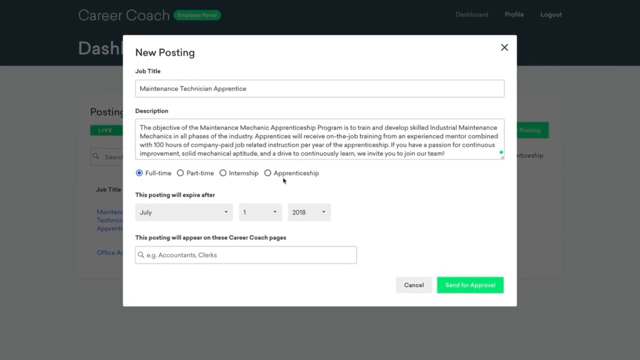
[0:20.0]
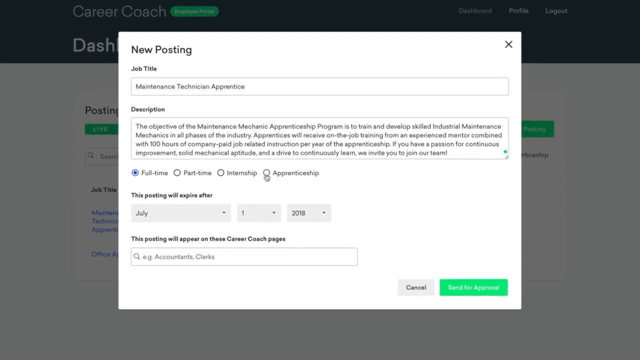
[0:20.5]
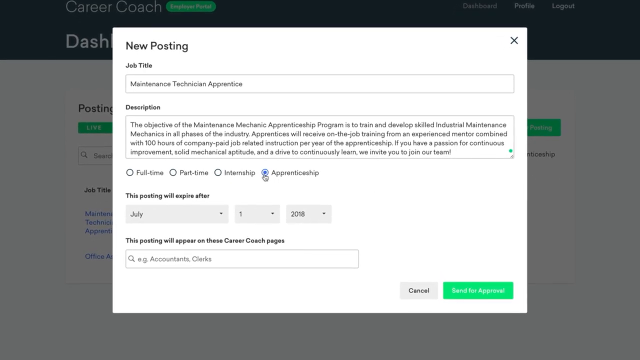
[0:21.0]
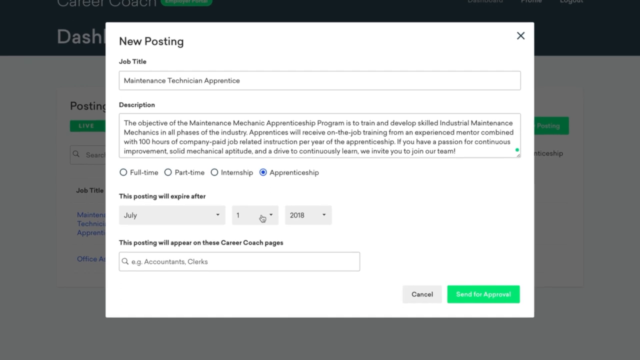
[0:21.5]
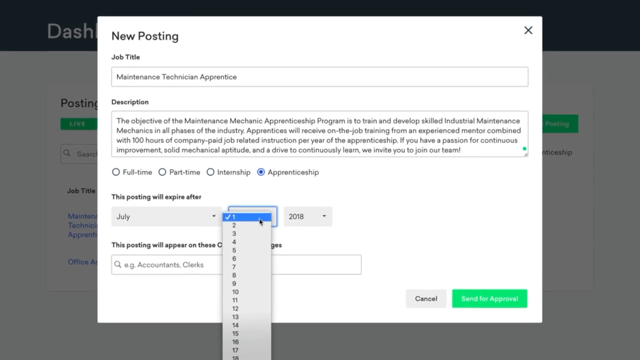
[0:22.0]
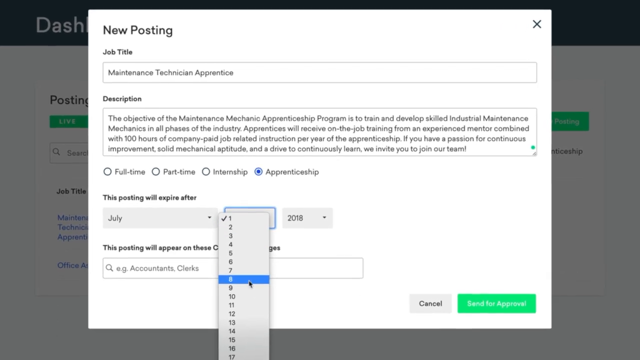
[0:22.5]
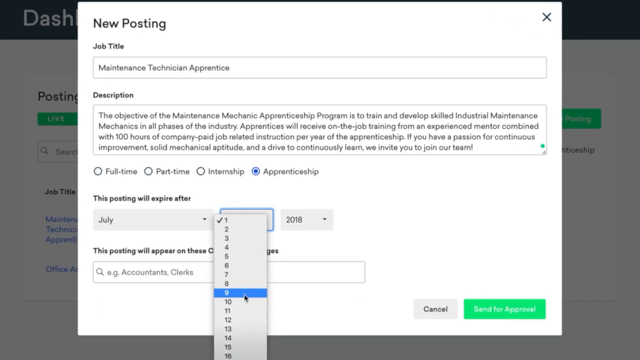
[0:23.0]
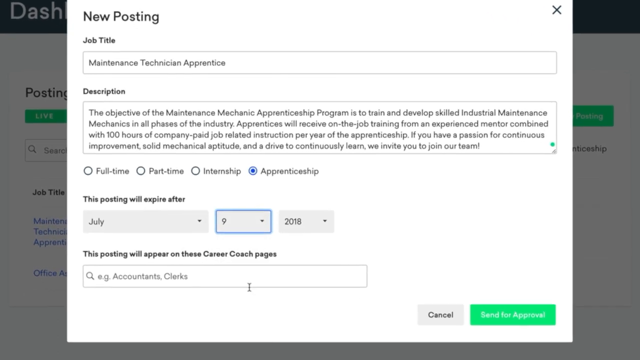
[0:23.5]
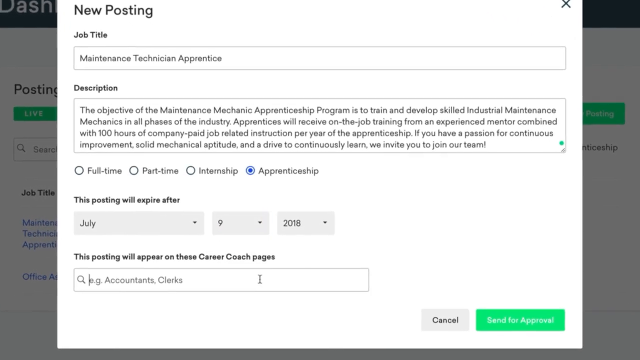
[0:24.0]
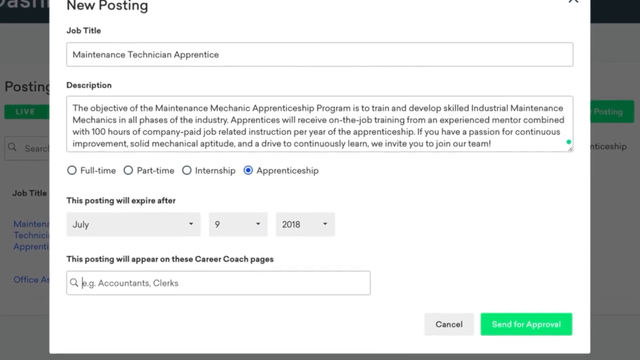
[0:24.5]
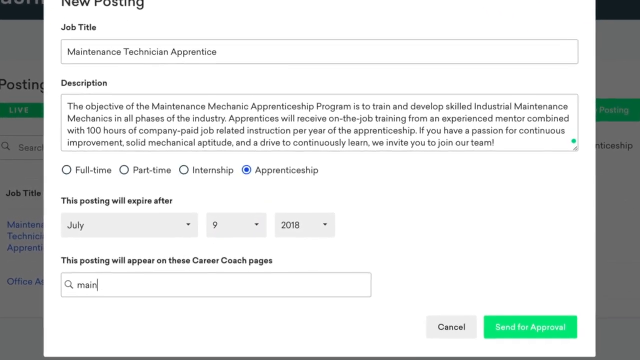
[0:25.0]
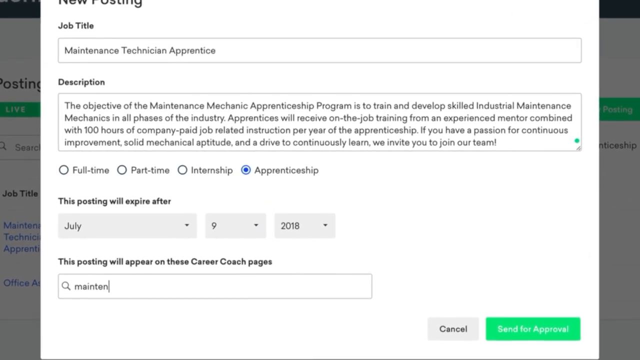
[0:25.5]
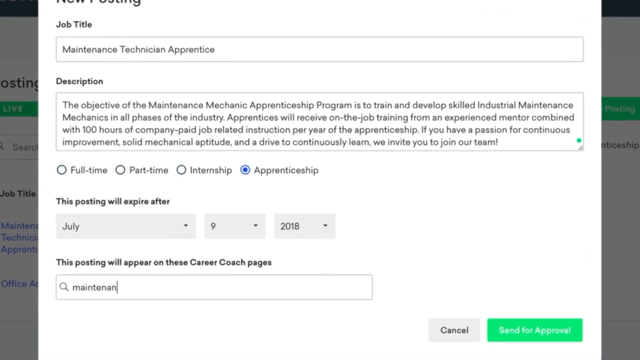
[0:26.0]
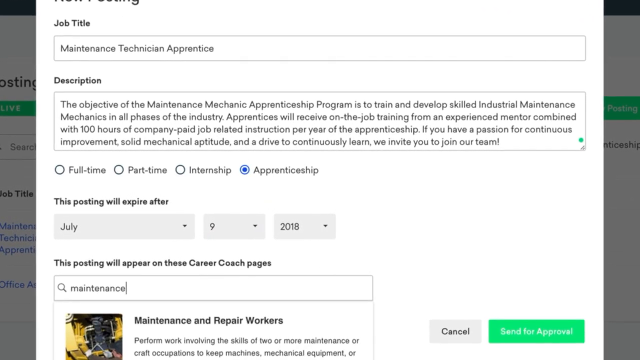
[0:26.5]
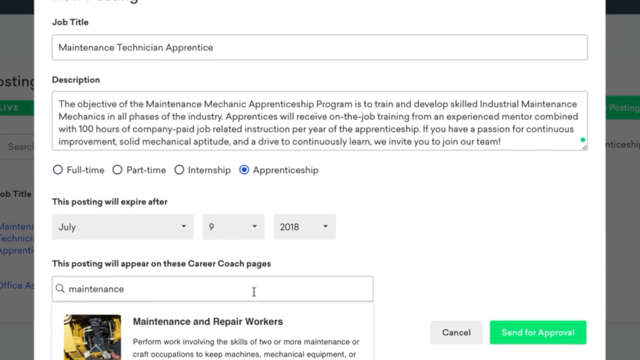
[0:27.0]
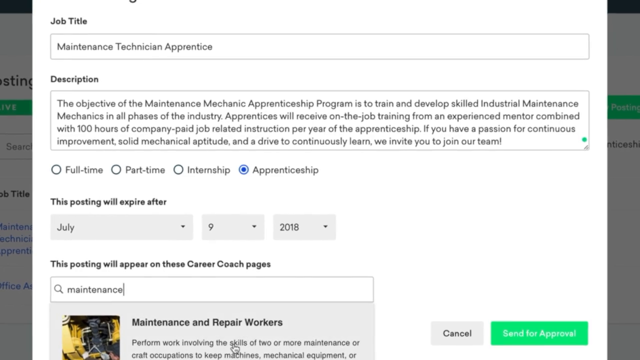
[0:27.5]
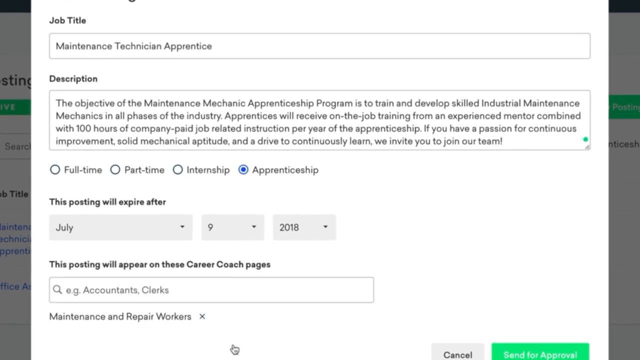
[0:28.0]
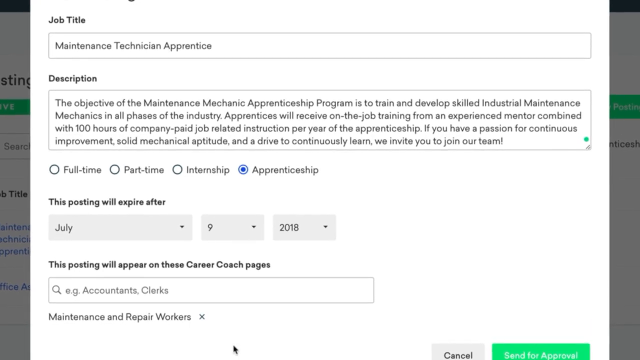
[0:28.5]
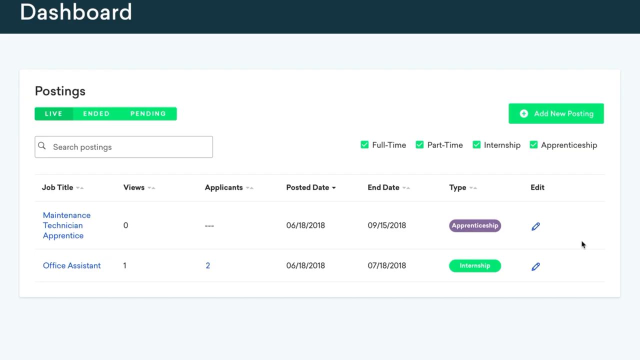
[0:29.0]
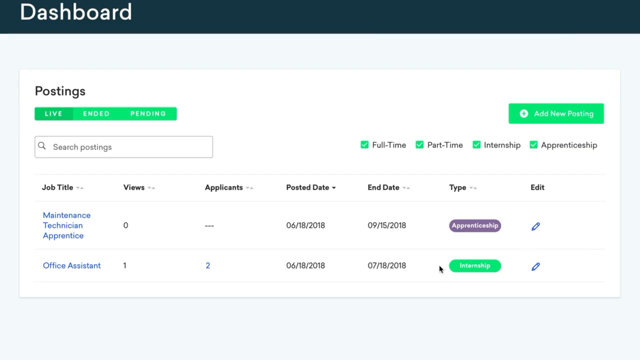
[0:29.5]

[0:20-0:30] A web page is open with a job posting titled "Maintenance Technician Apprentice." Its description reads: "The objective of Maintenance Mechanic Apprenticeship Program is to train and develop skilled industrial maintenance mechanics in all phases of the industry. Apprentices will receive on-the-job training from an experienced mentor combined with 100 hours of company-paid job-related instruction per year of the apprenticeship. If you have a passion for continuous improvement, solid mechanical aptitude, and a drive to continuously learn, we invite you to join our team." Below the text are four clickable options for full-time, part-time, internship, and apprenticeship, with apprenticeship selected. The posting is set to expire after July 9th, 2018, and the user types maintenance into a field labeled as where the posting will appear on Career Coach pages. The video then cuts to a dashboard.